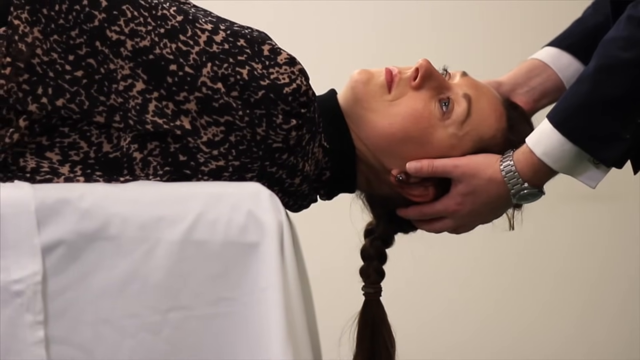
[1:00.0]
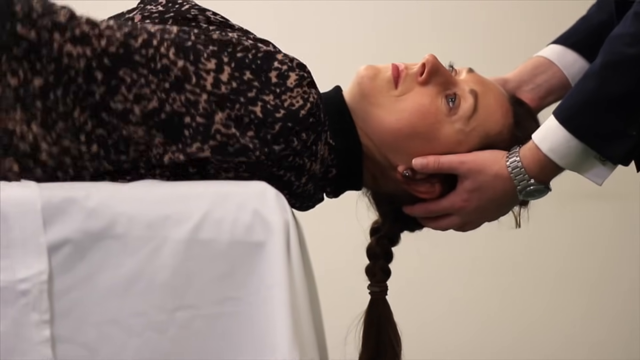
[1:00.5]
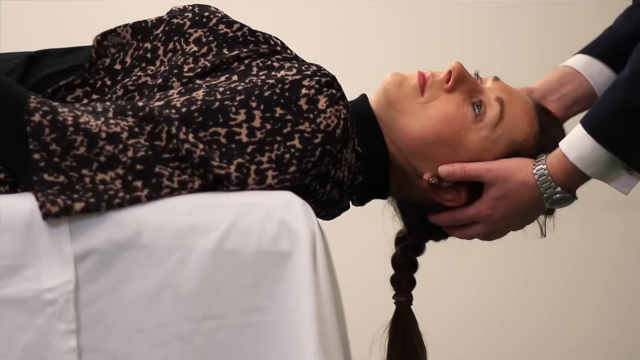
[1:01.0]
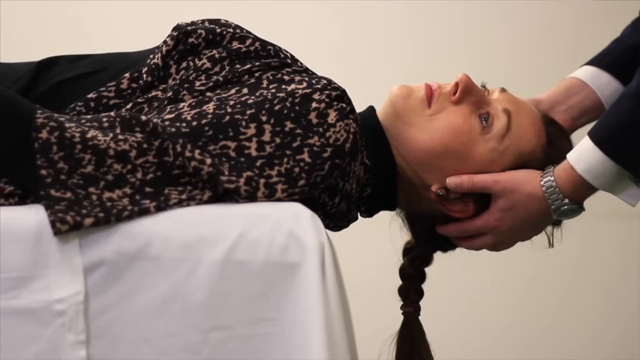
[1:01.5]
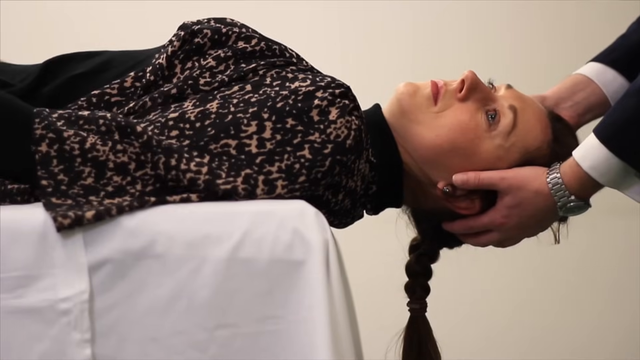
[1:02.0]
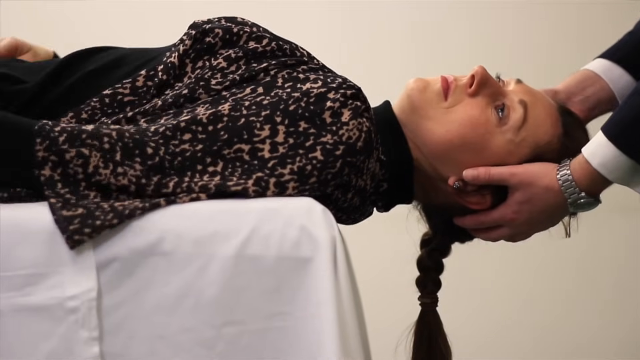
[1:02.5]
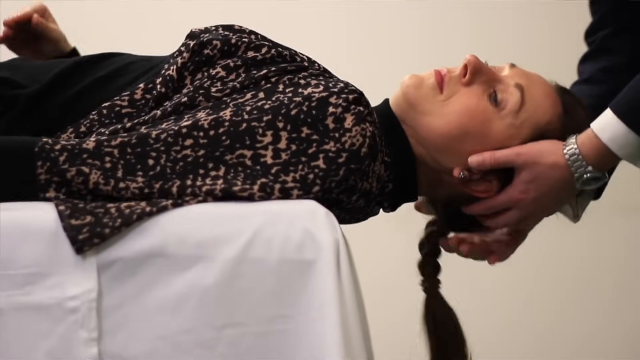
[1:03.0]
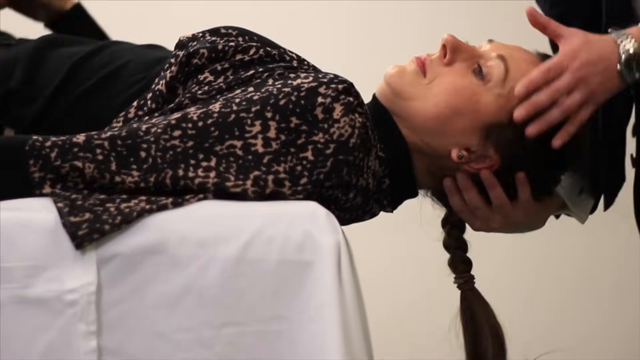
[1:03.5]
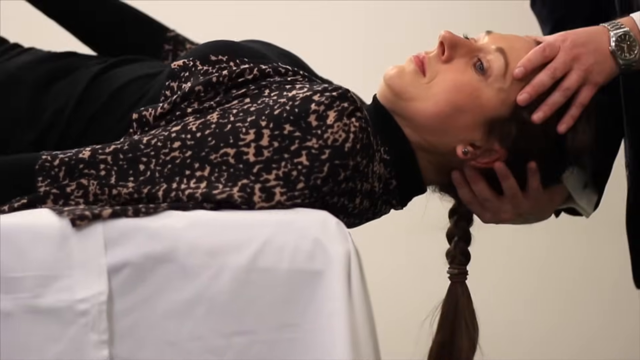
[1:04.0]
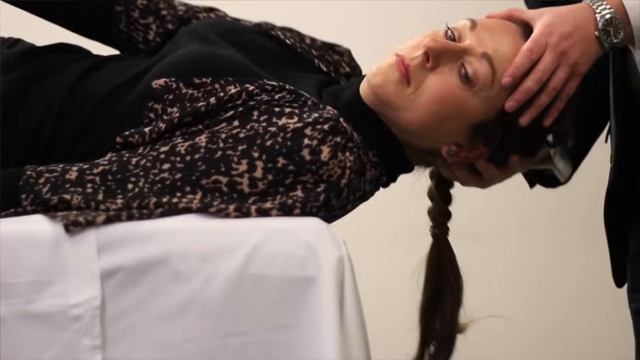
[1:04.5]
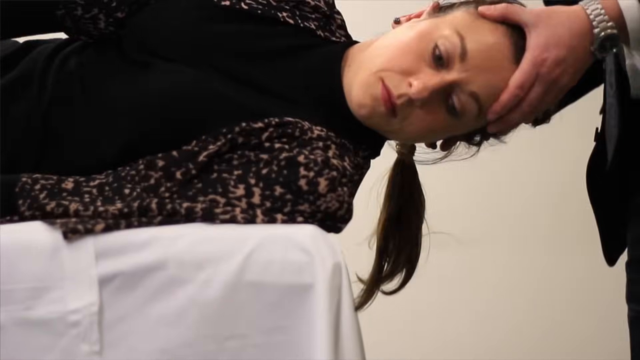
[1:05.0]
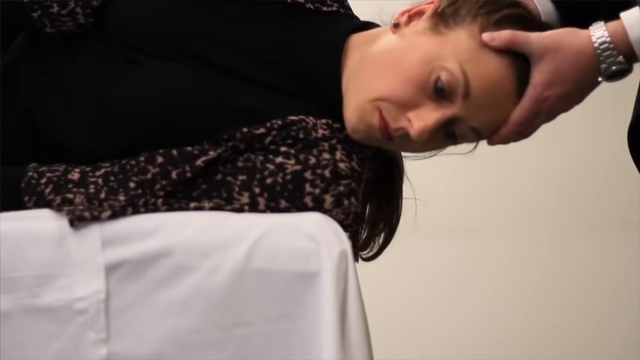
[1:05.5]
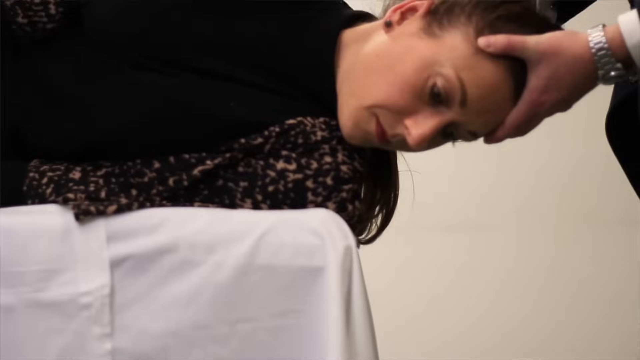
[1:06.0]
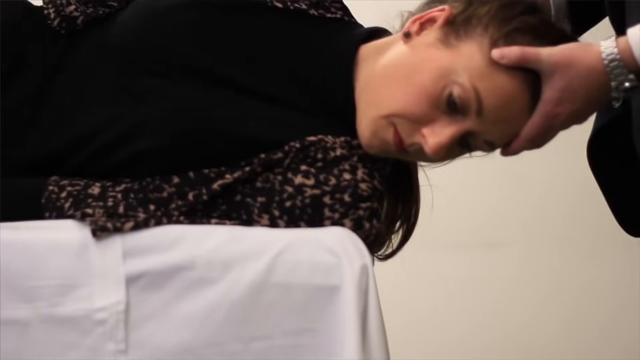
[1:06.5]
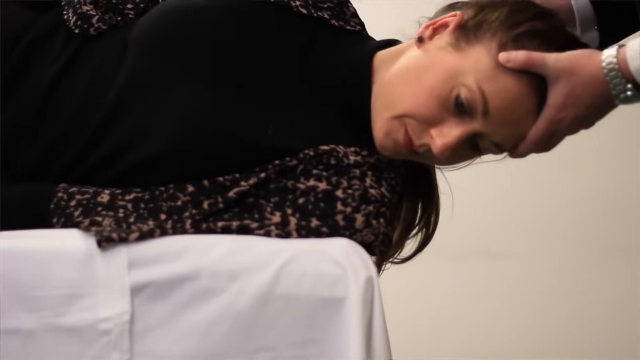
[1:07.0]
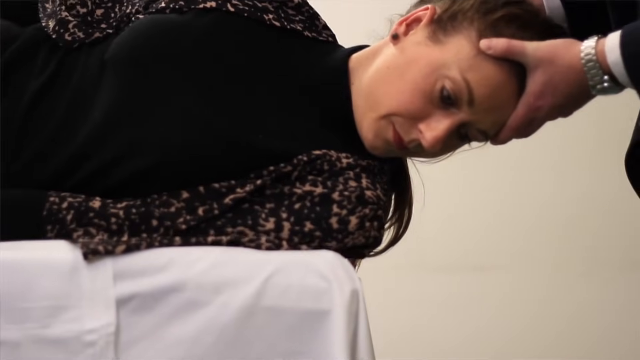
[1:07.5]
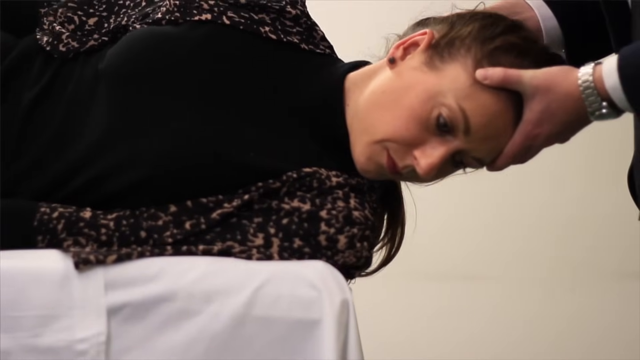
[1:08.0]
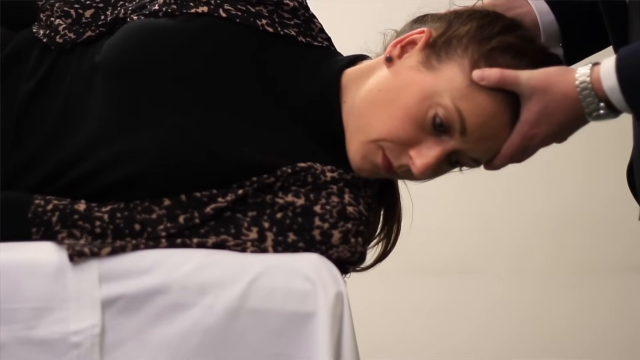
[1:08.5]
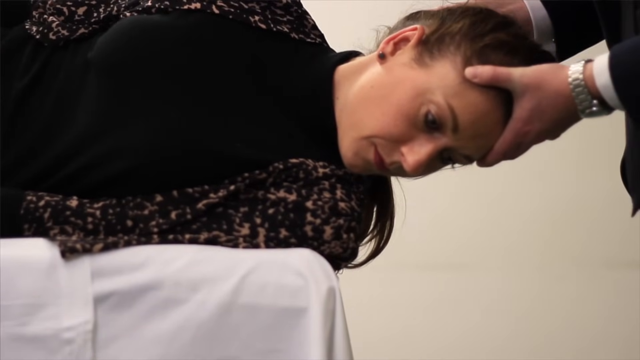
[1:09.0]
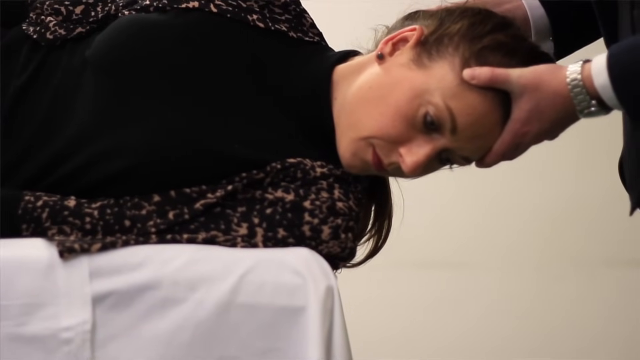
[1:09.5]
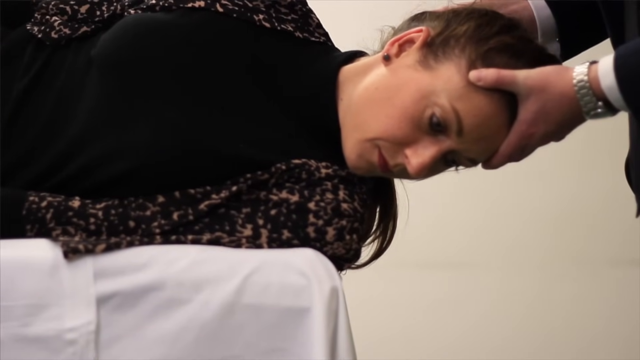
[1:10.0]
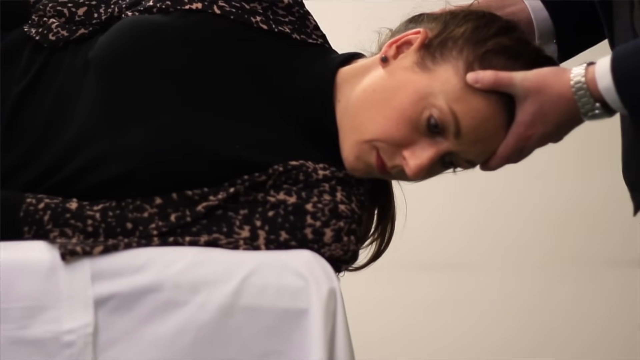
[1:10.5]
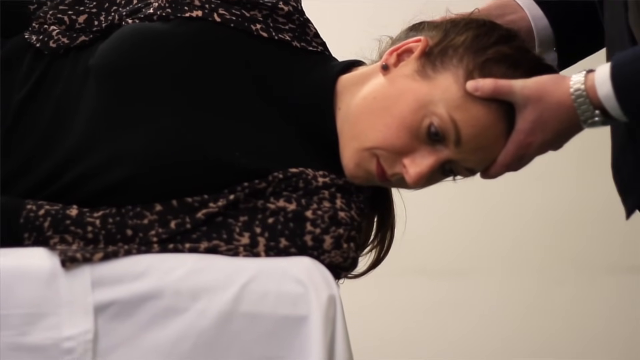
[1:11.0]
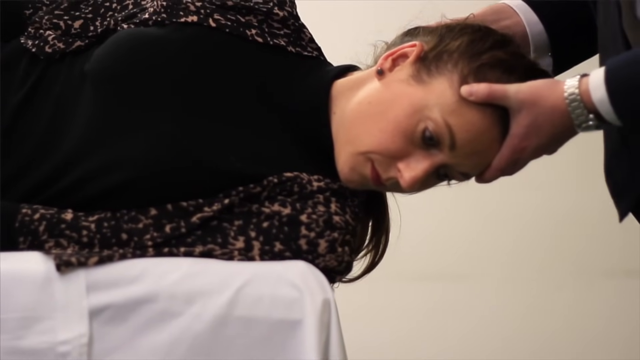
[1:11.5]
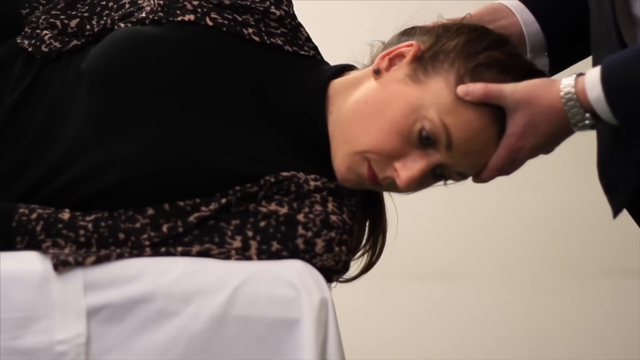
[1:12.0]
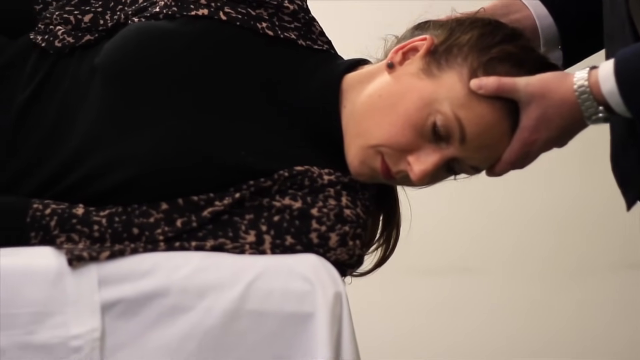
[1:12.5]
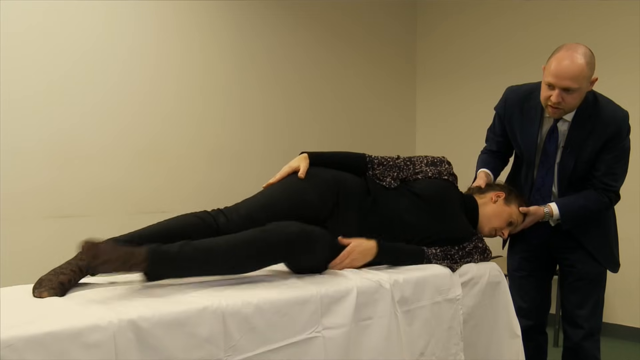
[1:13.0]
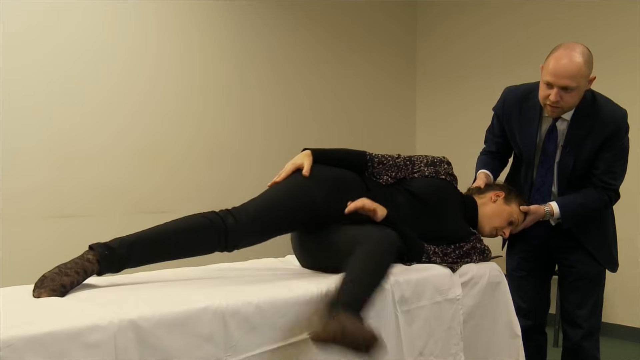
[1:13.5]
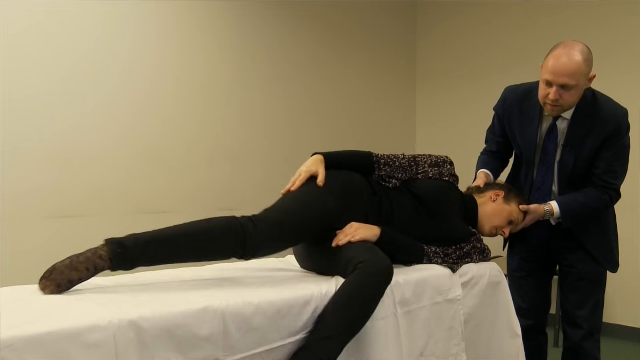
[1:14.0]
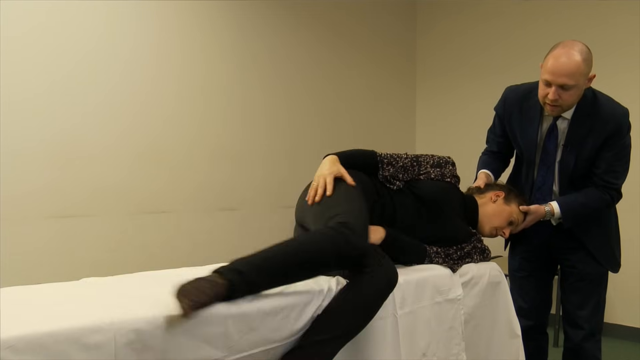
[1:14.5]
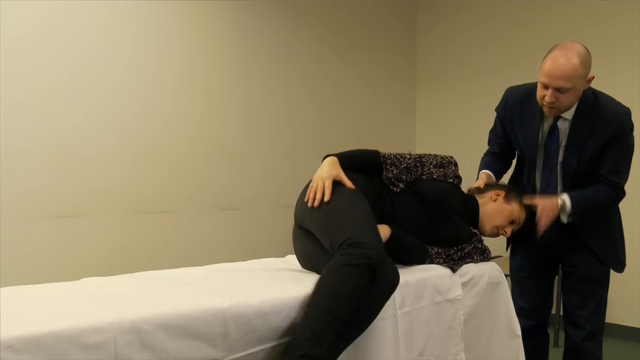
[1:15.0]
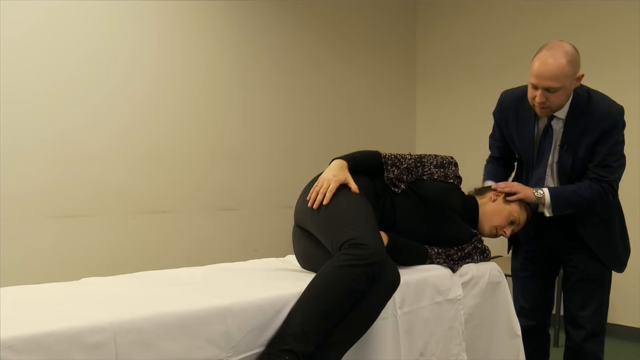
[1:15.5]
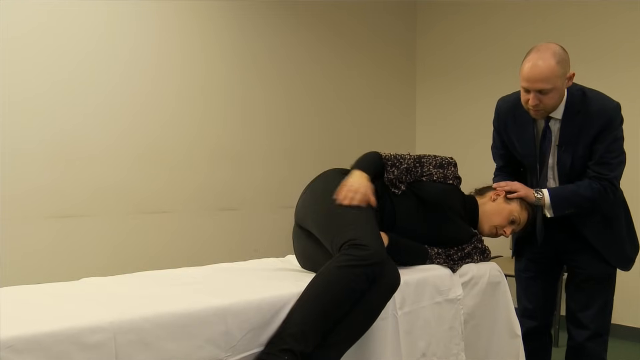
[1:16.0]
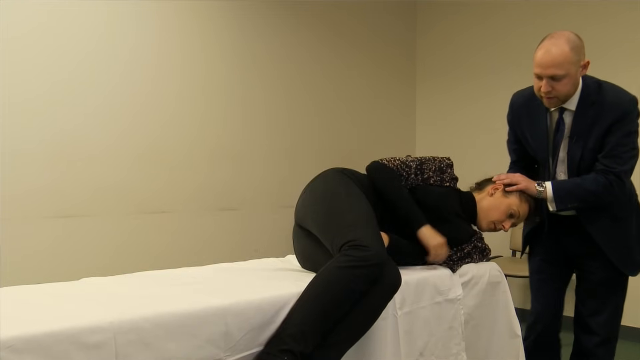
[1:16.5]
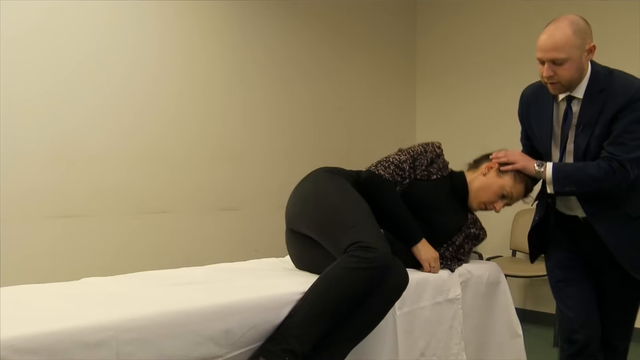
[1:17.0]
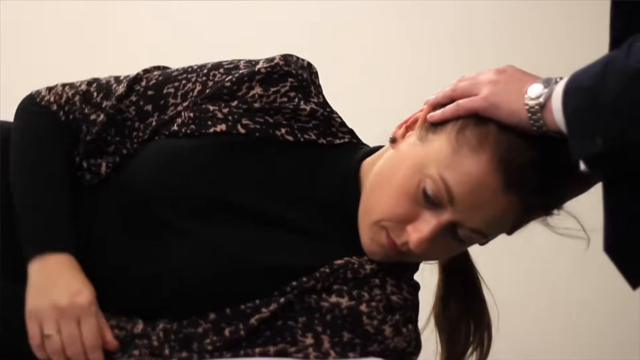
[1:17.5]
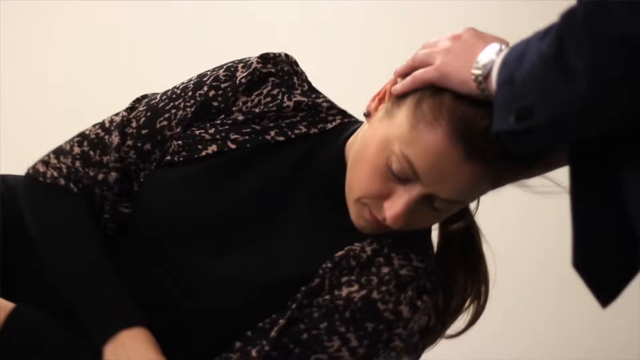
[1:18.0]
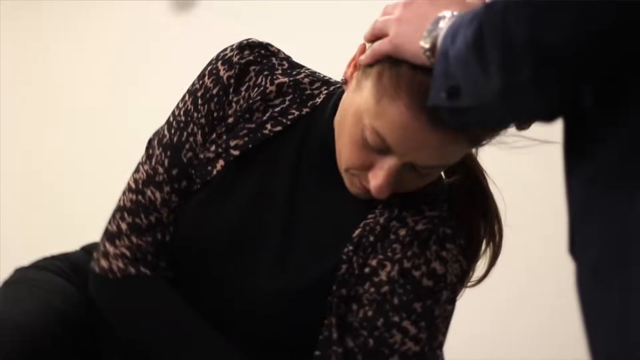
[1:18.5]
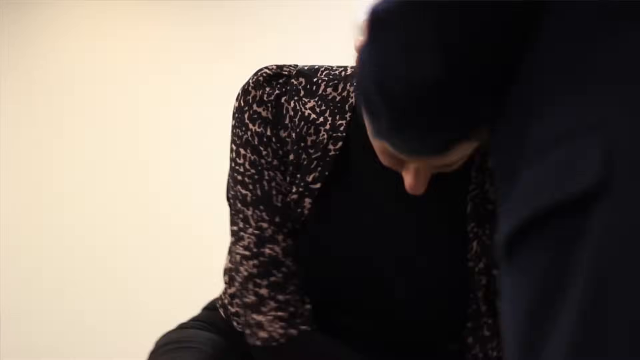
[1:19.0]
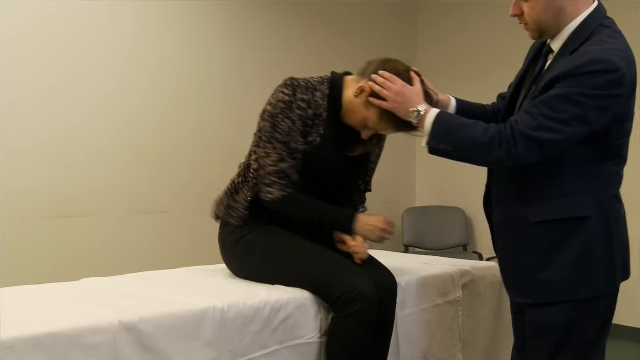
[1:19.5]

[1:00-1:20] The doctor's left hand is underneath the woman's head, propping it up, as she lies on the stretcher-like exam table with only her shoulders on the table. He turns her completely over onto her side so she is looking down, with his hand over her head. He then brings her up, changes the position of his hands, gets his right hand underneath her head, and turns her head toward the camera, looking down, while still holding it. She looks straight down at the floor. She brings her left leg over the table, then her right leg, and rests her right arm on her thigh while the doctor is hunched over her.